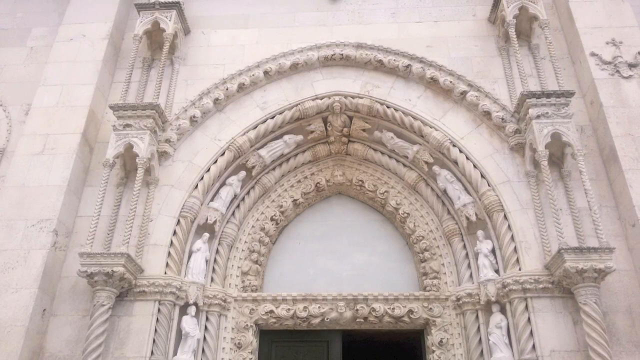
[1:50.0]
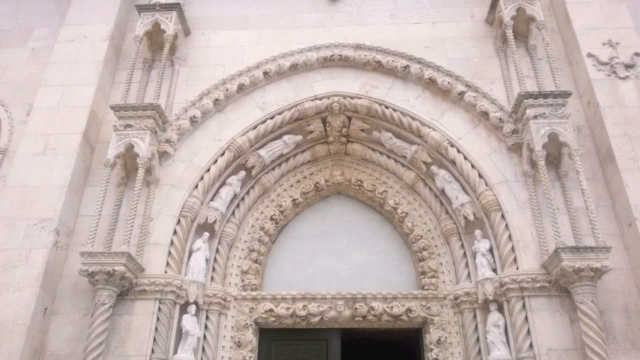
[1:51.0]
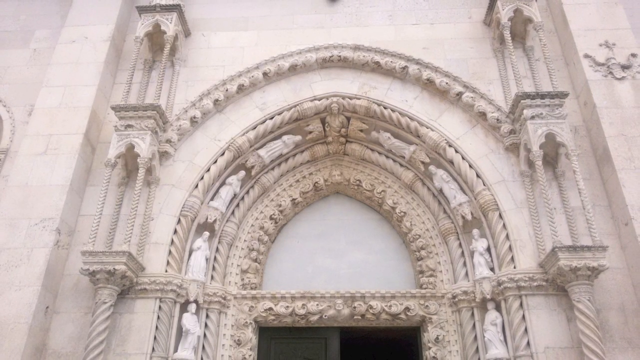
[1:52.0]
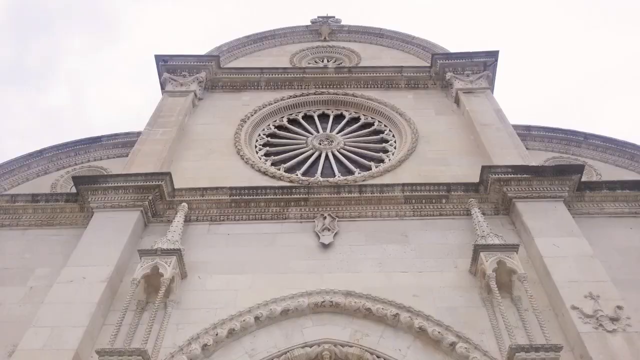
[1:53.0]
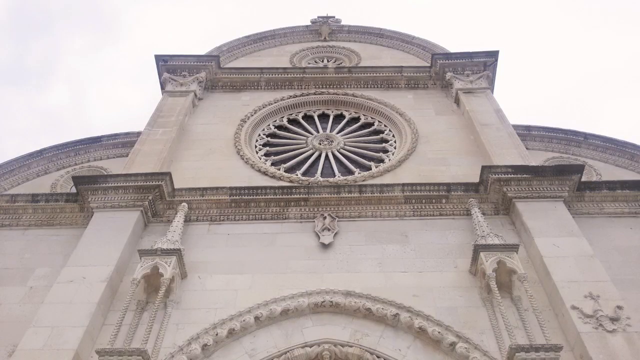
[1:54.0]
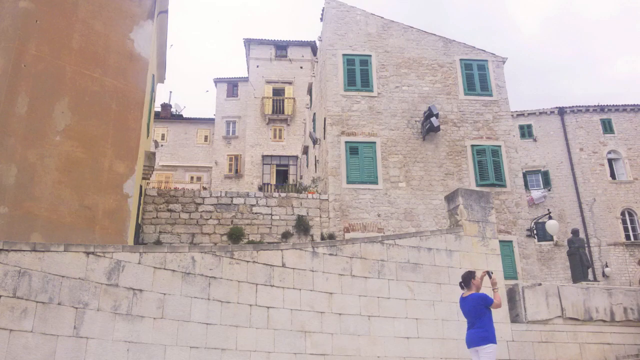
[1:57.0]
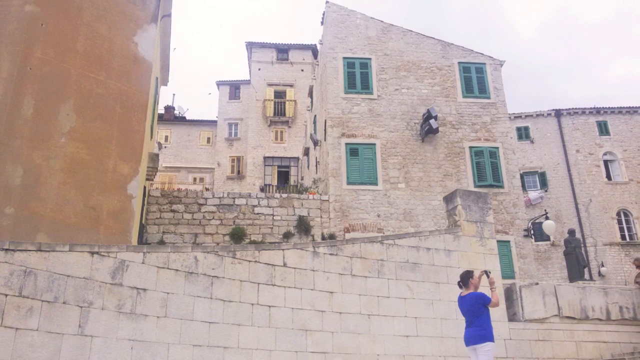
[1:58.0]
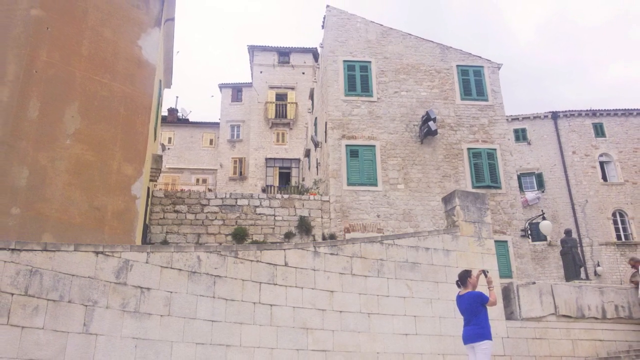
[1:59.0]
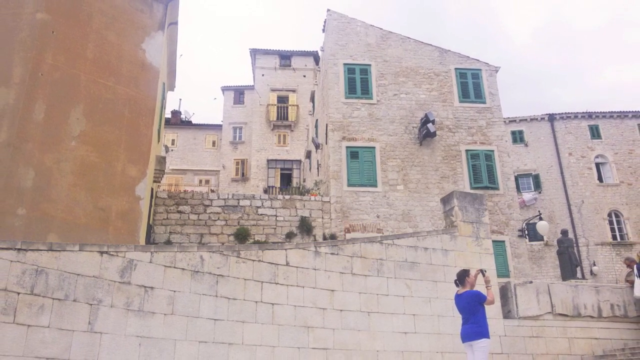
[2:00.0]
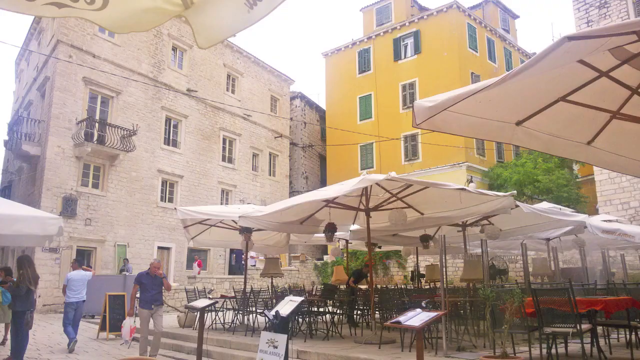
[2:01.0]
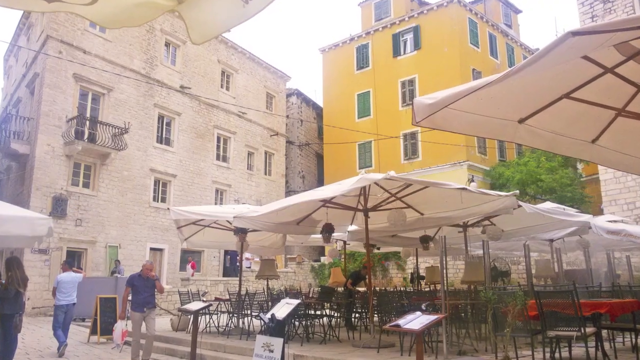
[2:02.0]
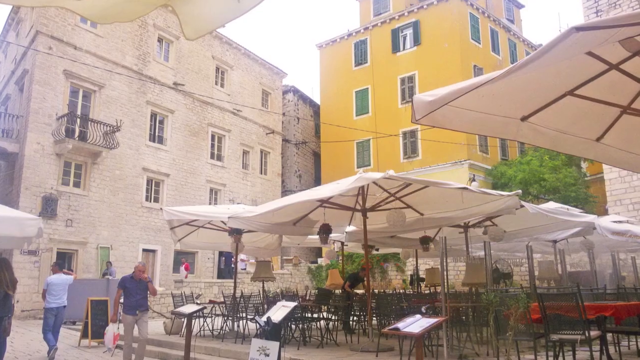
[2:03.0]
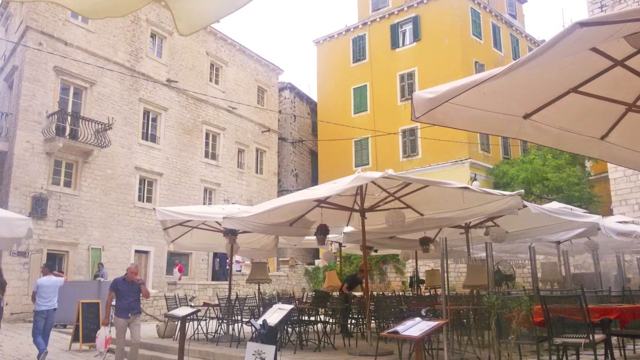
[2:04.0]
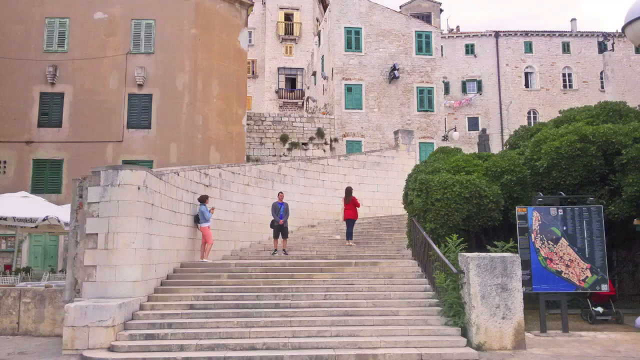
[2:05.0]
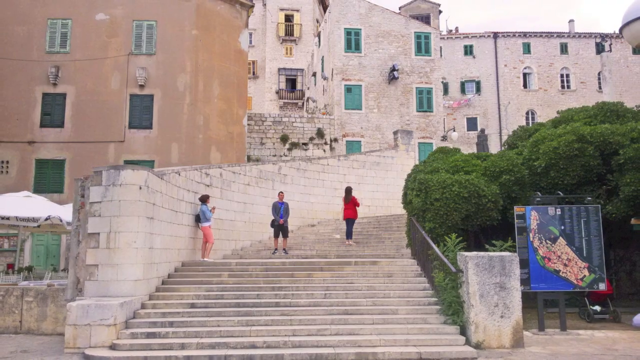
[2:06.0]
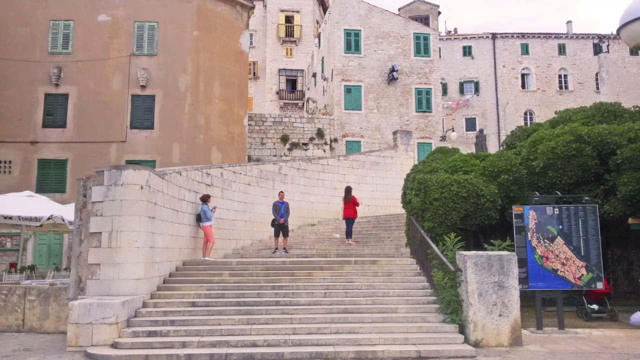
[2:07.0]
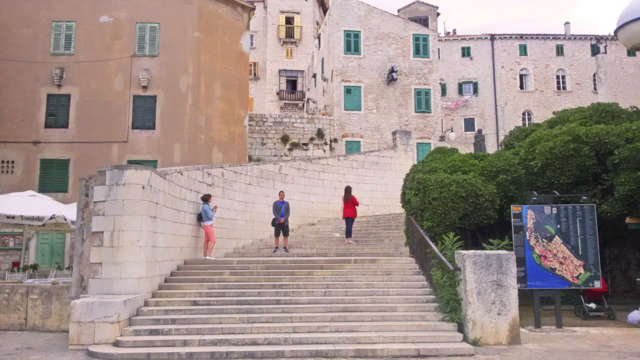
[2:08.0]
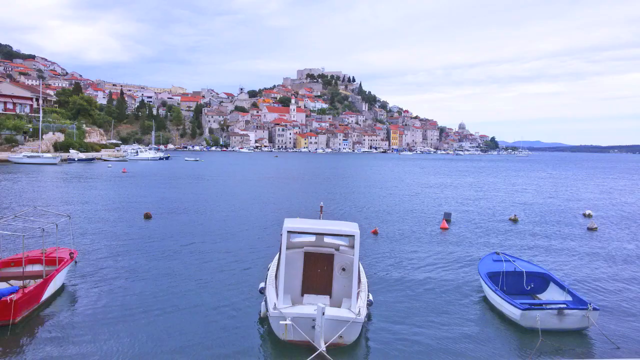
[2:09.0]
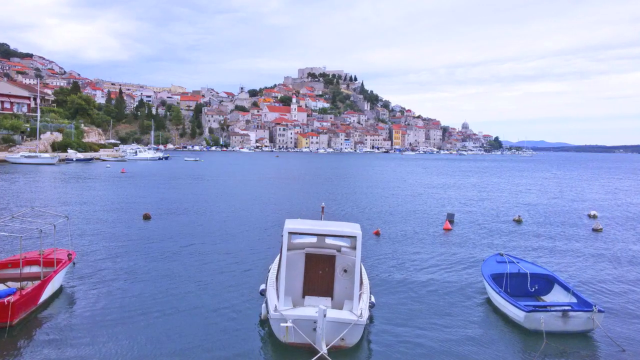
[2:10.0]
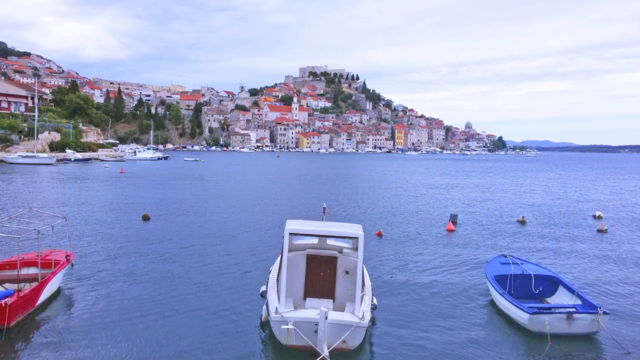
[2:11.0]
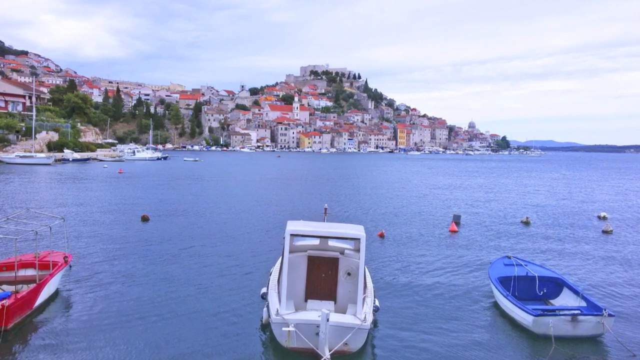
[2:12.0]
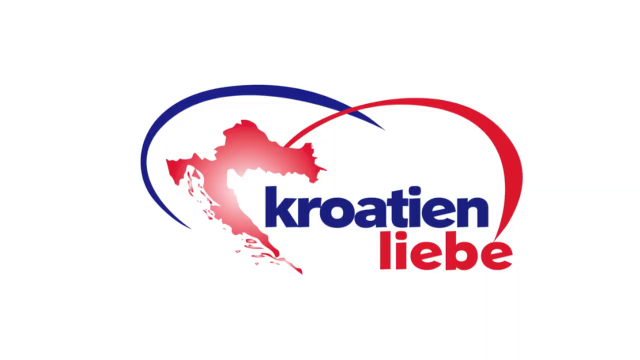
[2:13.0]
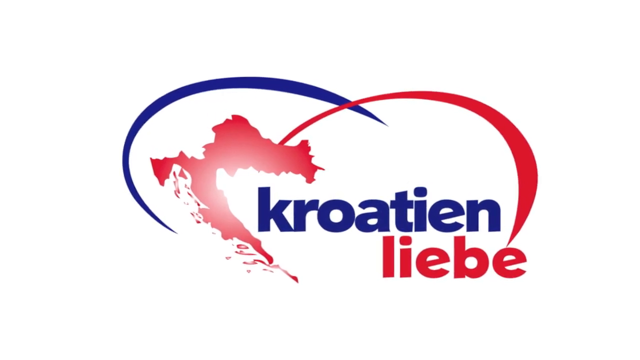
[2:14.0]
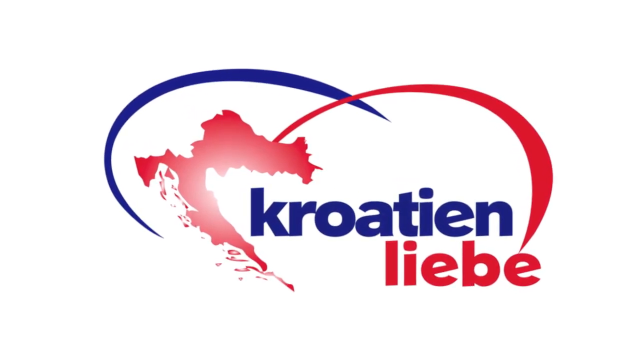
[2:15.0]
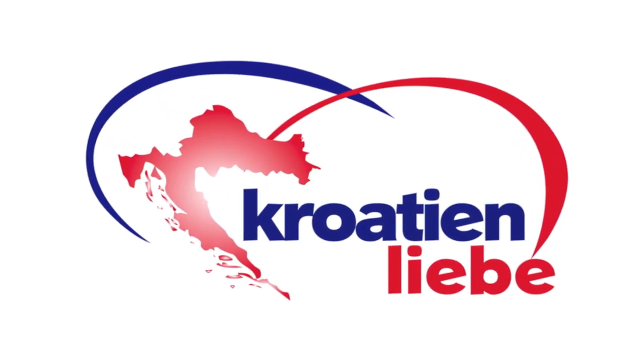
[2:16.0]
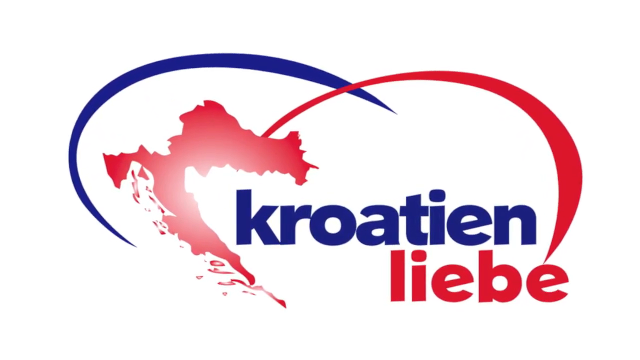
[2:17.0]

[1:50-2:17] The video starts with an outside view looking almost straight up at the front of an off-white building made of cement or brick, with what looks to be a large oval window in the front; it looks to be about two to three tiers high, with a gray, overcast sky in the background. It transitions to a different set of what looks to be about three or four buildings under a gray, overcast sky, with brown and green windows; one of the buildings has a roof on an angle. A person in front looks to be taking a picture. Next is another set of buildings: in the center a tall yellow building, maybe about five or six stories high, and to its left a tan, cement-based building, probably about four stories high, maybe a little smaller than the yellow one. At street level there are a bunch of umbrellas with some people walking by them. The video then shows what might be about three apartments made of cement, with steps in front leading up to one of them and three people standing on the steps. The camera starts zooming out a little, and then the video transitions to a photo of what looks to be a bay or a huge river, with a few boats up front, a hill with many different houses in the background, and an overcast sky. The last thing shown is a logo that says "Croatian Liebe", with a red depiction of maybe the country and a blue swirl and a red swirl going around it.